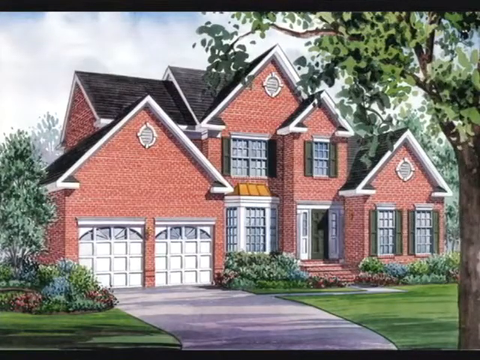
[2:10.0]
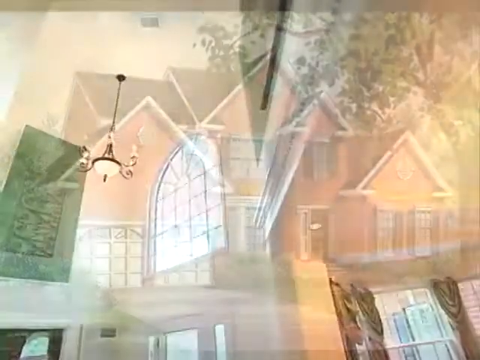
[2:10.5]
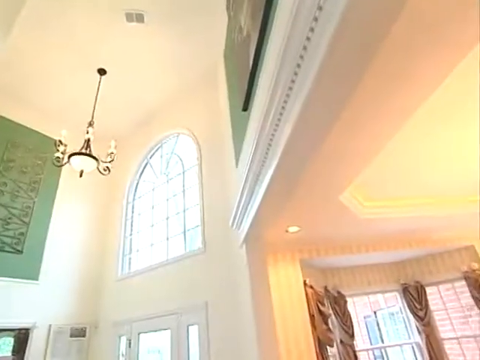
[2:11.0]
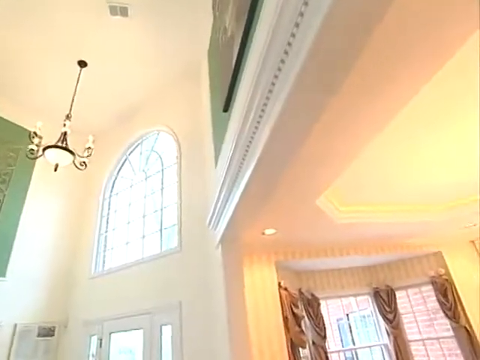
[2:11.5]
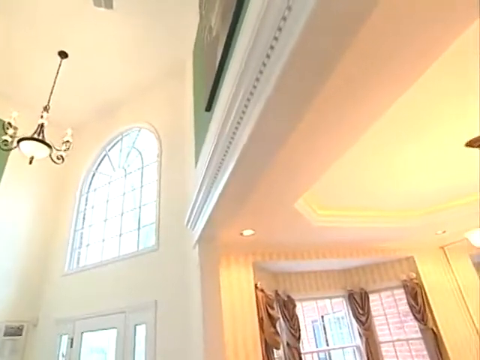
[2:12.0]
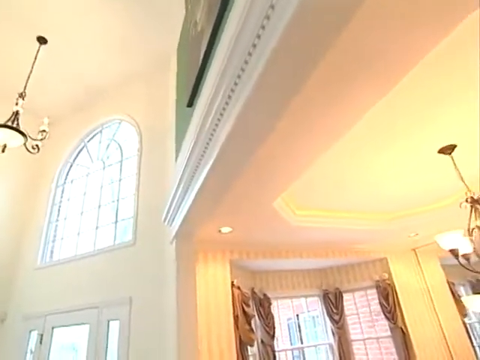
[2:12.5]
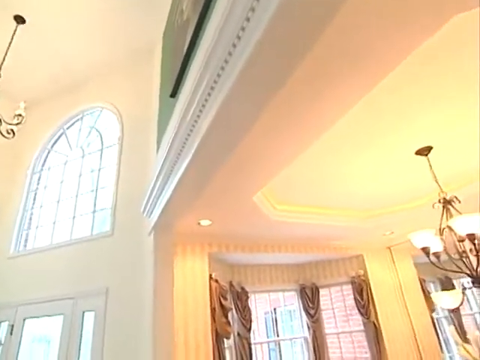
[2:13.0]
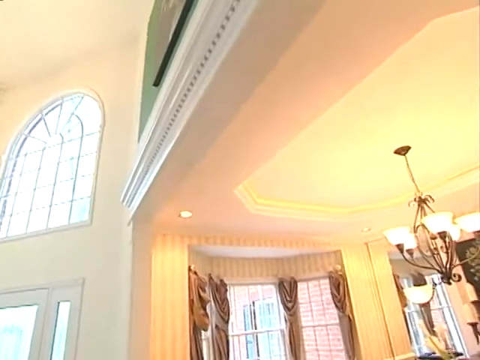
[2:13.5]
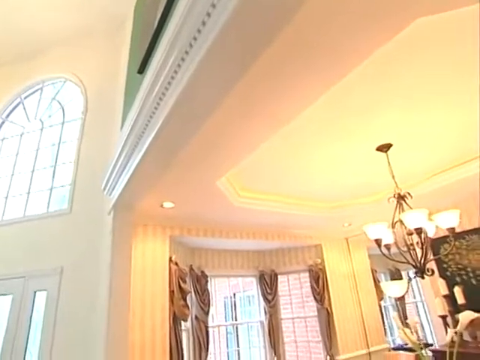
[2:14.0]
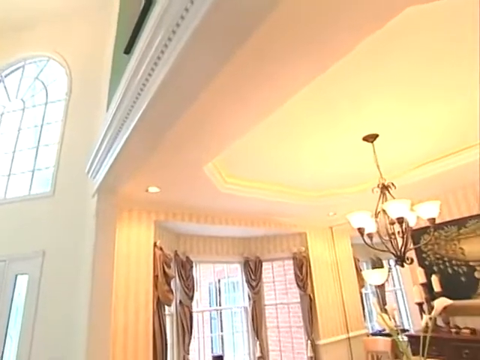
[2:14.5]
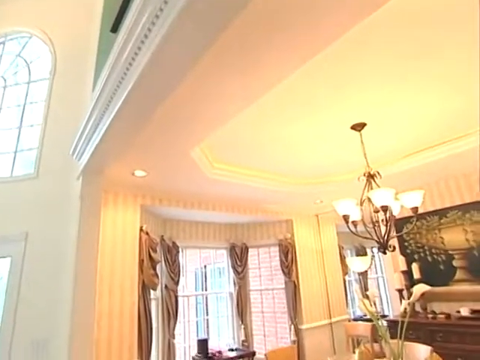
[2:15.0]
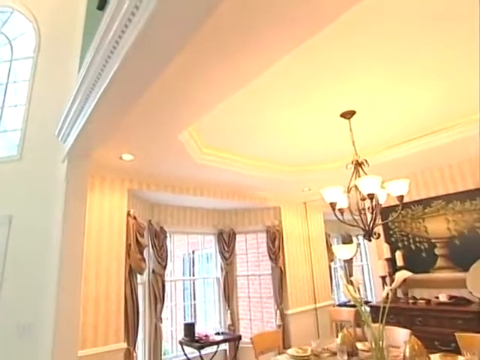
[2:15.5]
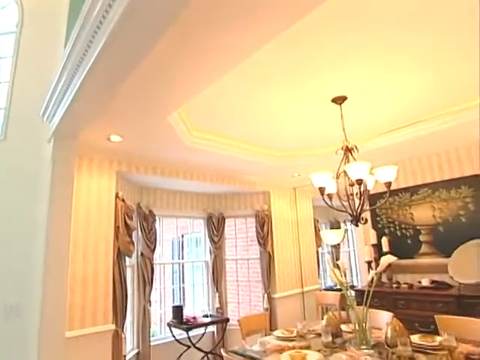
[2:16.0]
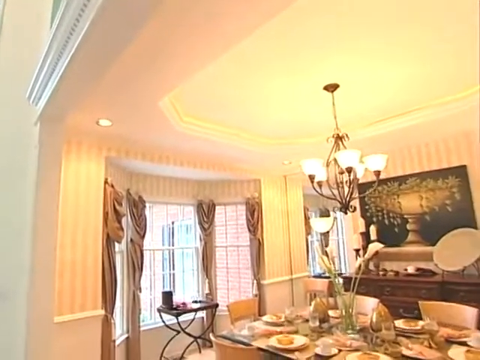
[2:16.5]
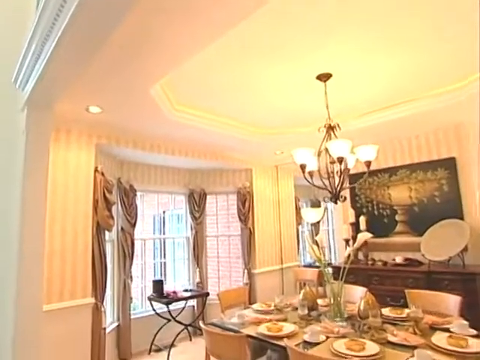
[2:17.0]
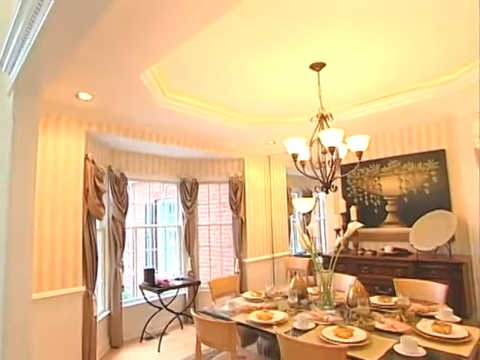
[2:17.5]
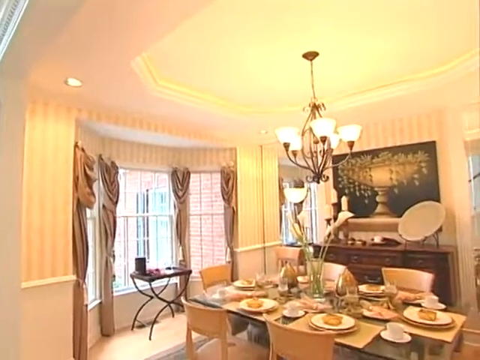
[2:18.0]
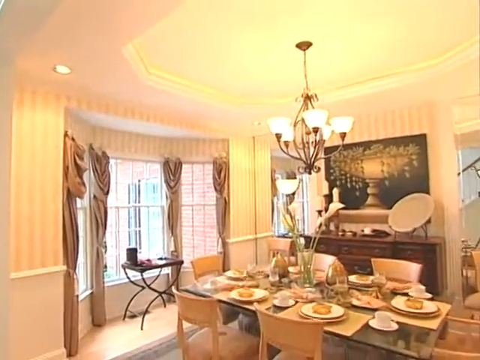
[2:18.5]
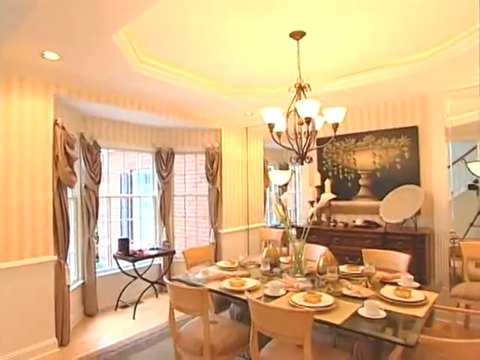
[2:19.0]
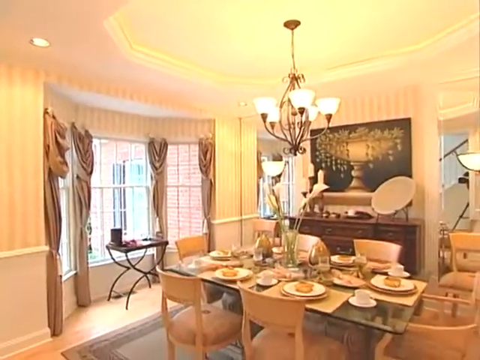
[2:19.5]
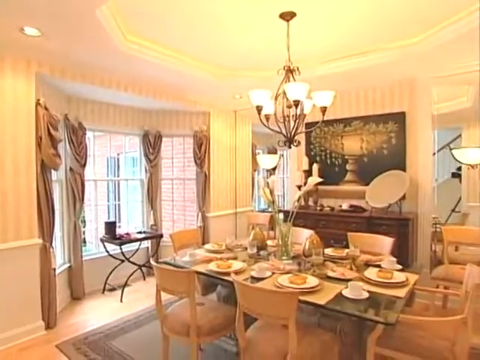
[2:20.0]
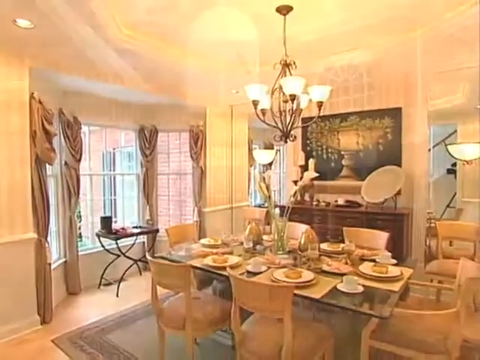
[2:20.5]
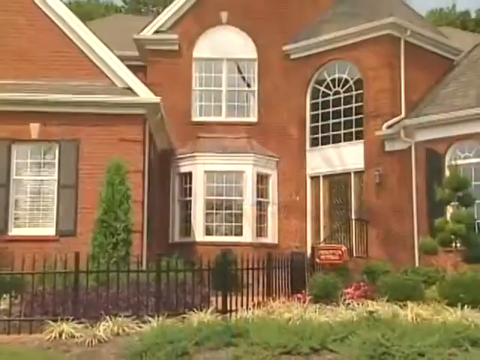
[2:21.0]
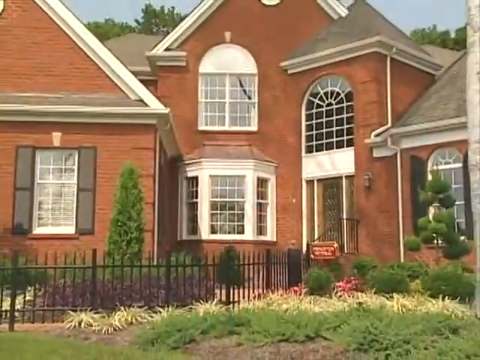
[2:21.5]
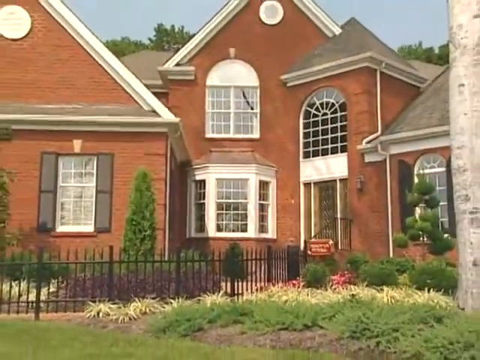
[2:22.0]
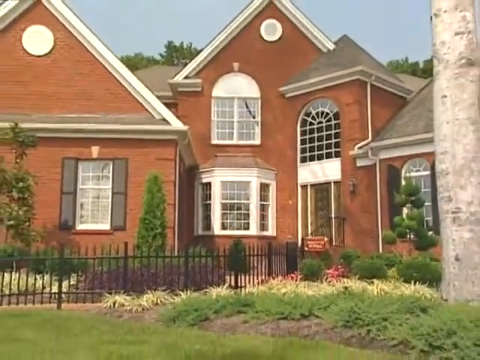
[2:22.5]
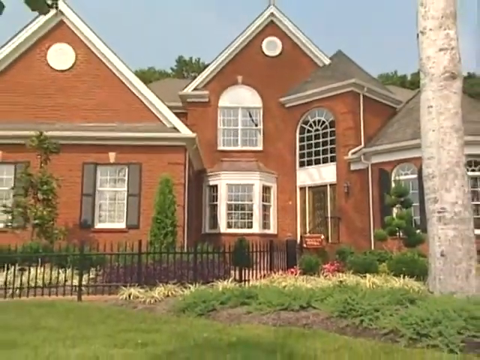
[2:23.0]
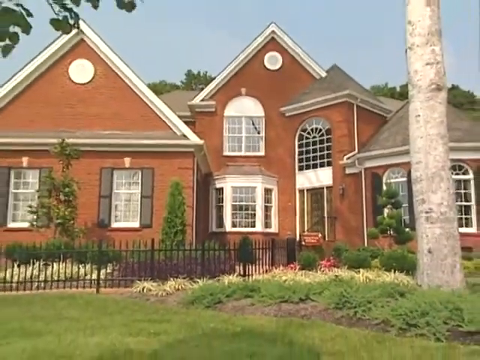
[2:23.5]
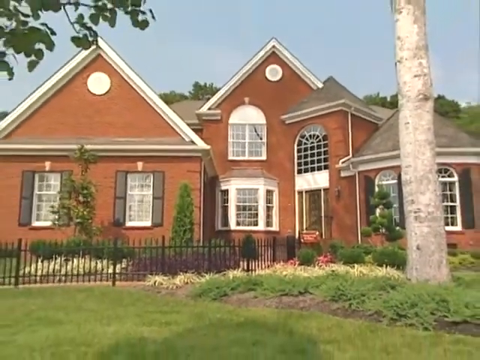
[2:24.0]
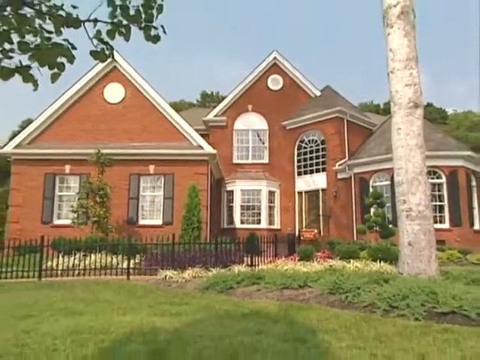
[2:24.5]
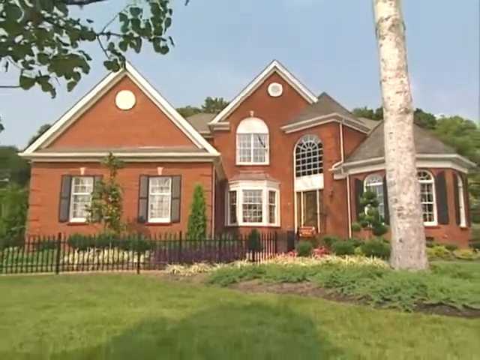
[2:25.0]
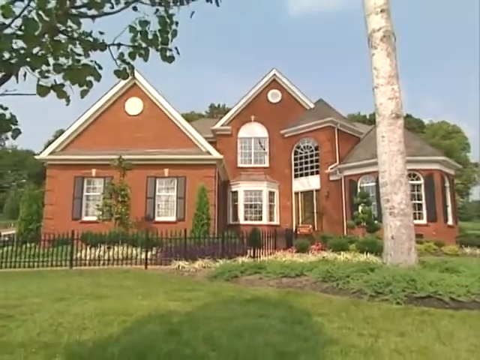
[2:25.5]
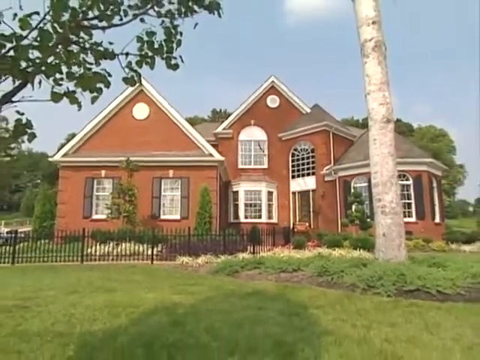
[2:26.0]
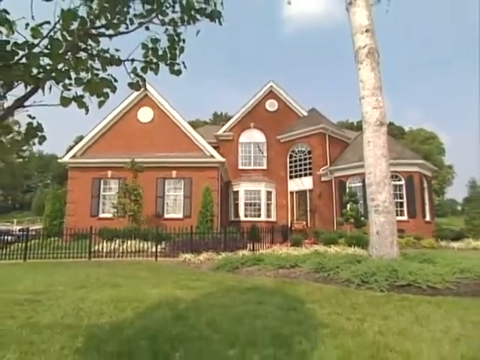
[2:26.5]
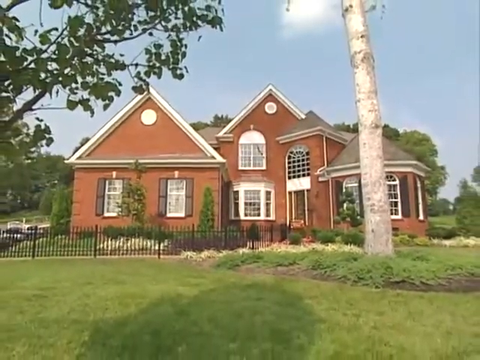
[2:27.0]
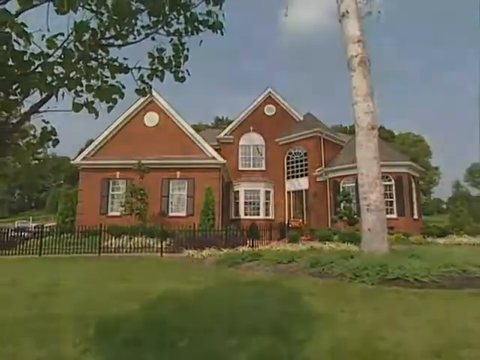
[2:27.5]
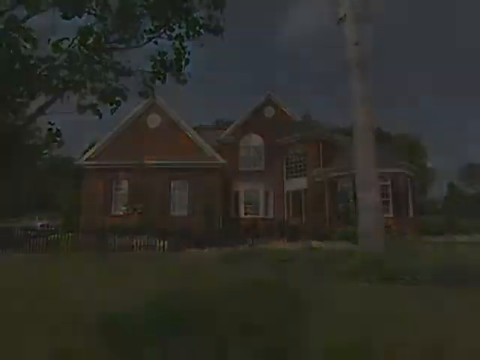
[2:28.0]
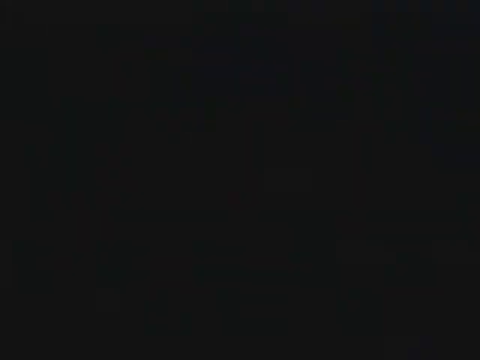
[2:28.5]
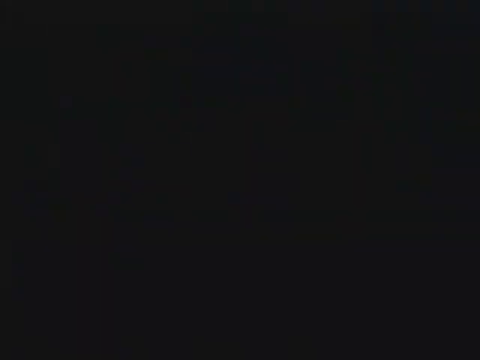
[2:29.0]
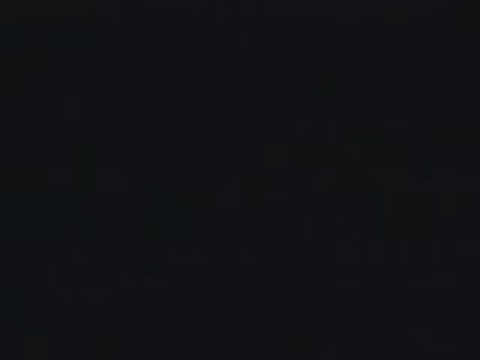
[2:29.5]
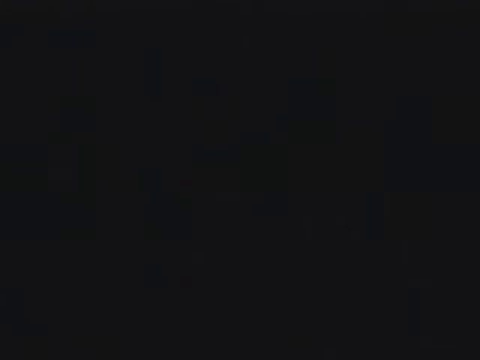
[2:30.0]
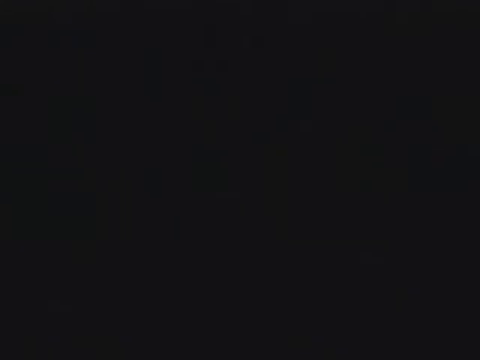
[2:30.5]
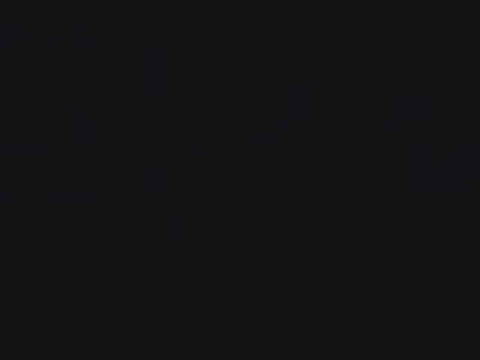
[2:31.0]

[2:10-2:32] The same drawings of the building appear before the video switches to panning footage of the house. It starts with a chandelier style light fitting, a large green artwork and an arched window, and a green wall with a canvas, before moving into the lower area of the house. There is a giant canvas of a large goblet style item with some plants dangling down, a plant in a jar, and a dining table with a full set of plates neatly arranged on it. There are six chairs at the dining table, a small table by the windows, and a set of drawers below the painting of the goblet holding a standard plate and other ornamental items. The shot then switches to the outside of the building and zooms out to show the full building. It then fades to black.